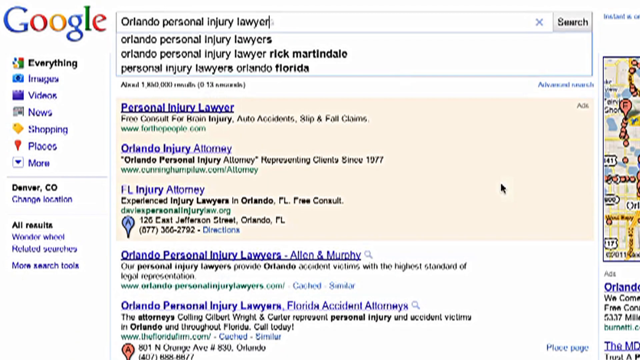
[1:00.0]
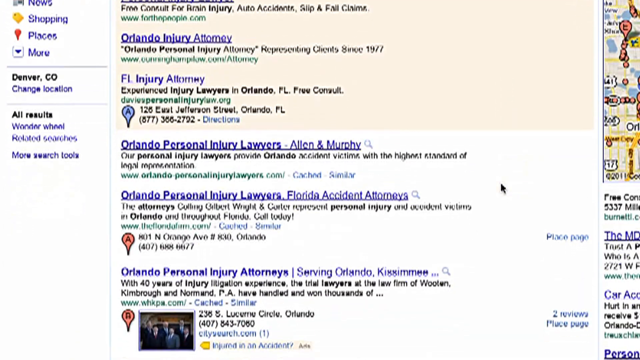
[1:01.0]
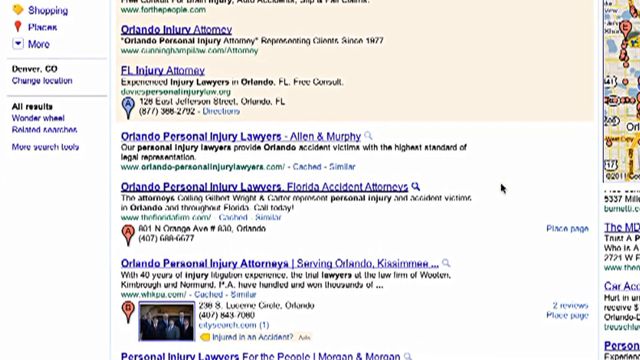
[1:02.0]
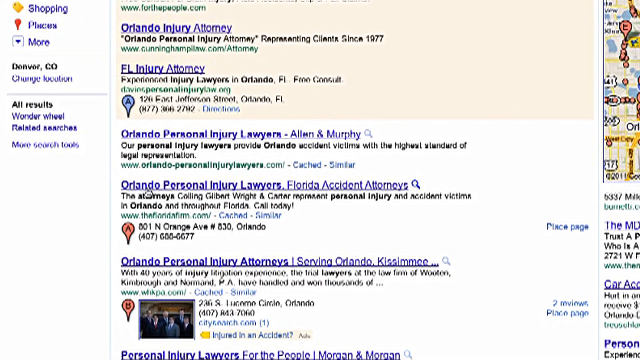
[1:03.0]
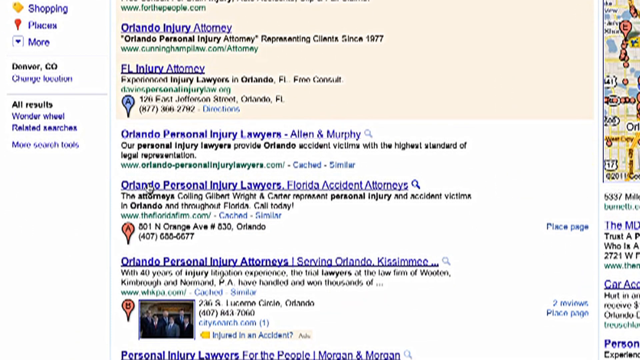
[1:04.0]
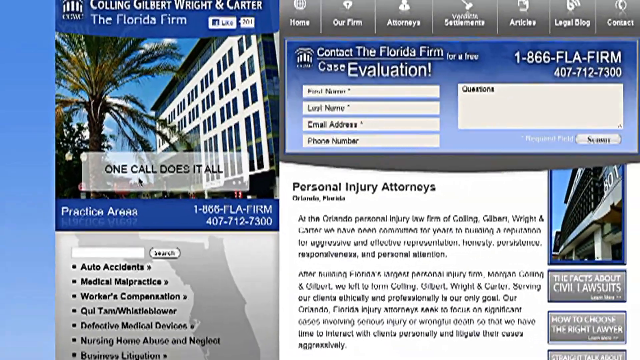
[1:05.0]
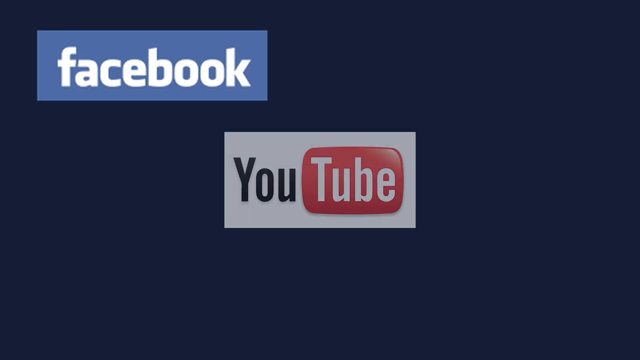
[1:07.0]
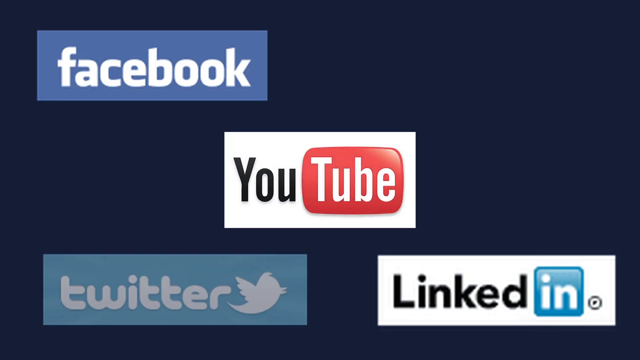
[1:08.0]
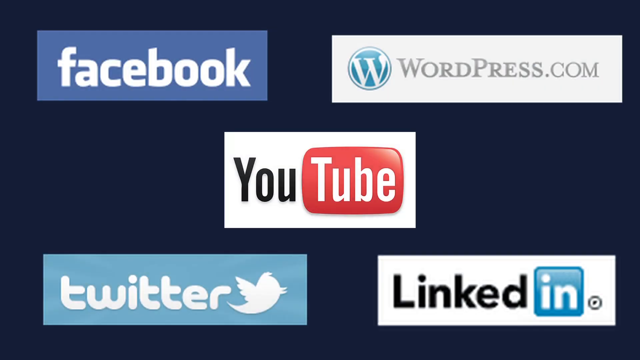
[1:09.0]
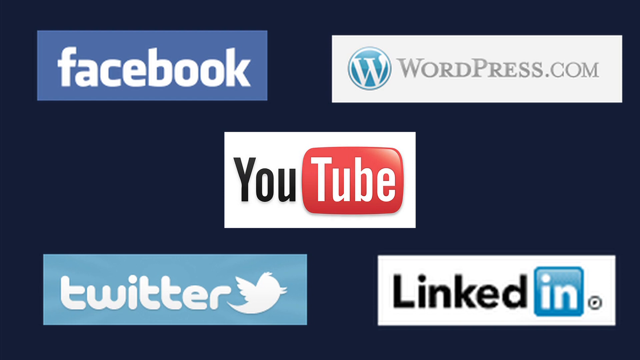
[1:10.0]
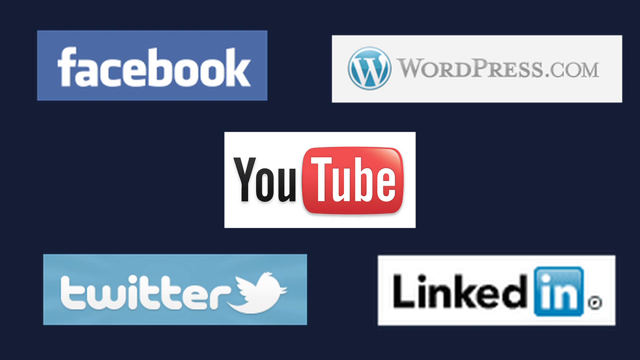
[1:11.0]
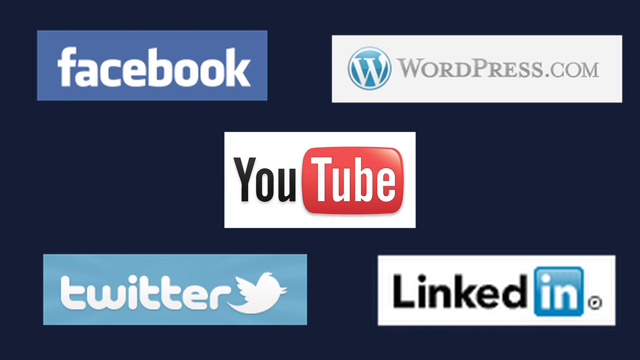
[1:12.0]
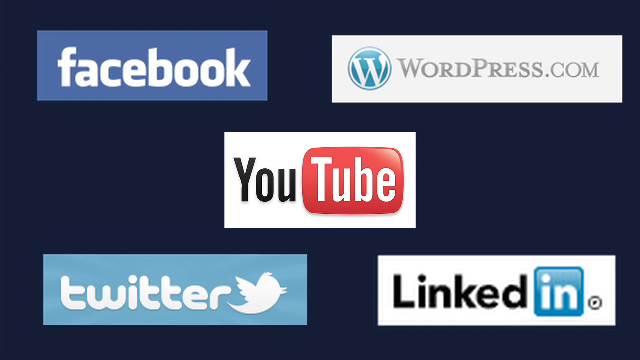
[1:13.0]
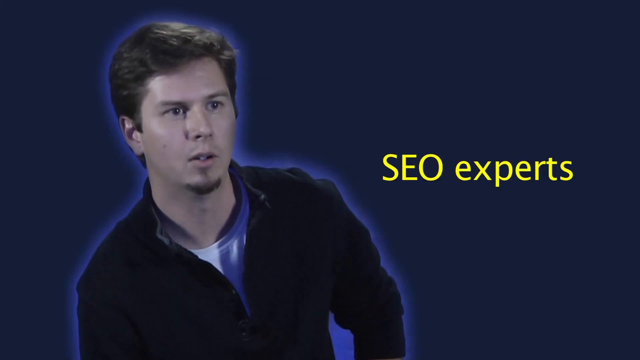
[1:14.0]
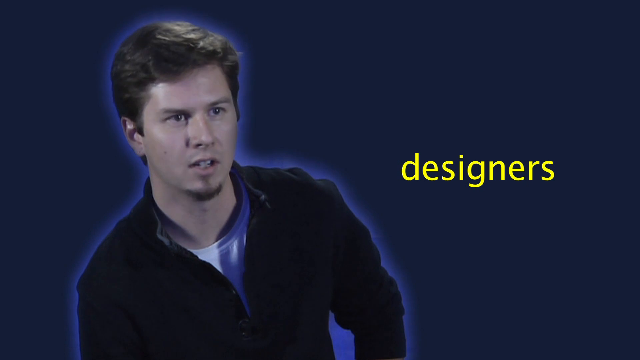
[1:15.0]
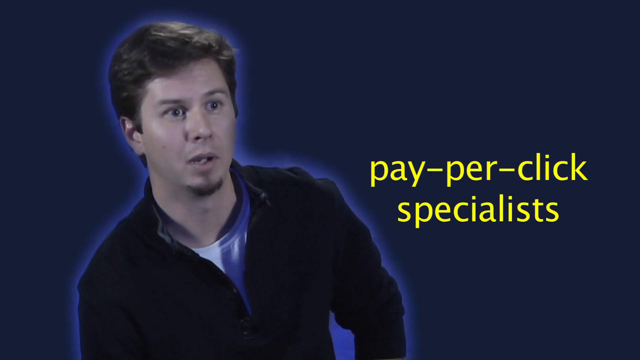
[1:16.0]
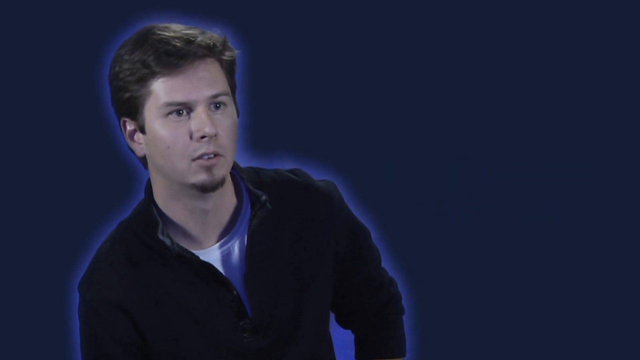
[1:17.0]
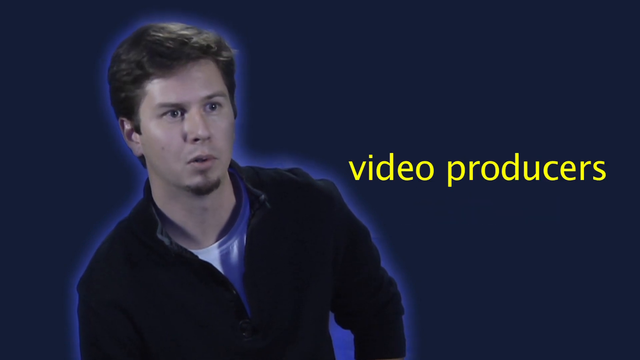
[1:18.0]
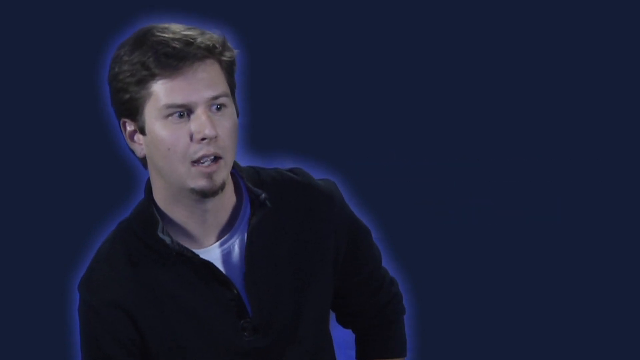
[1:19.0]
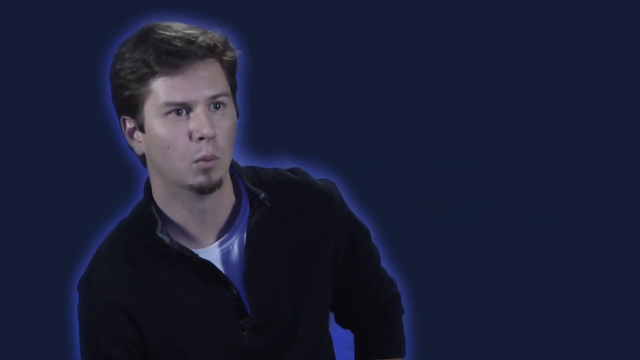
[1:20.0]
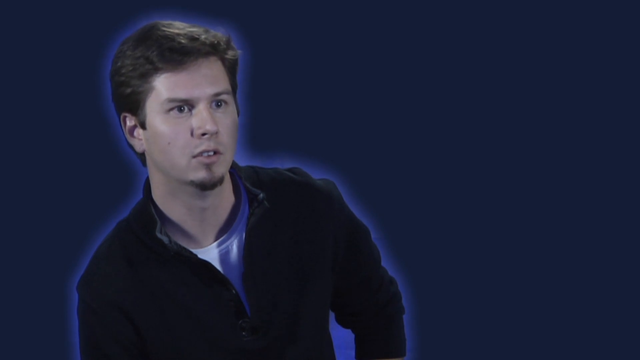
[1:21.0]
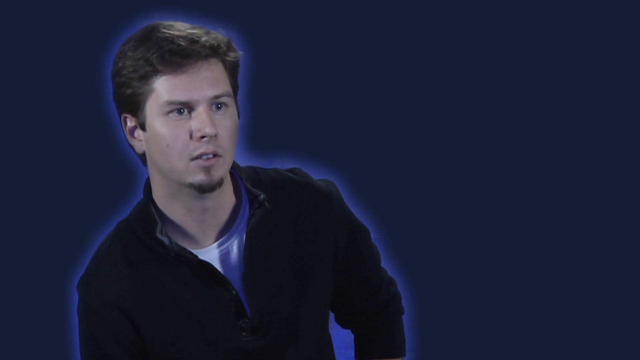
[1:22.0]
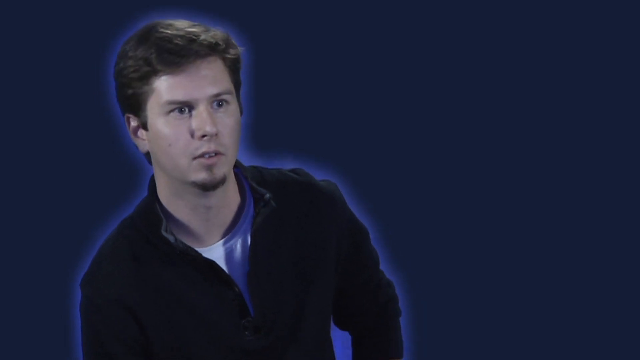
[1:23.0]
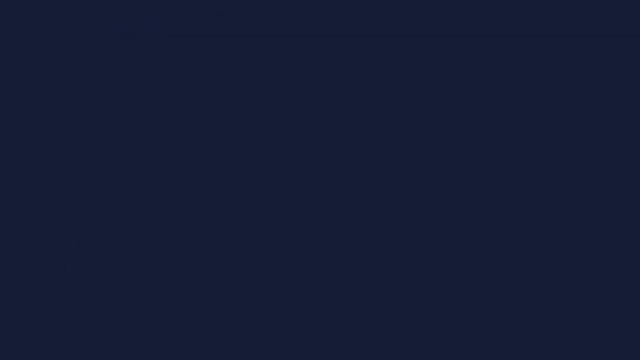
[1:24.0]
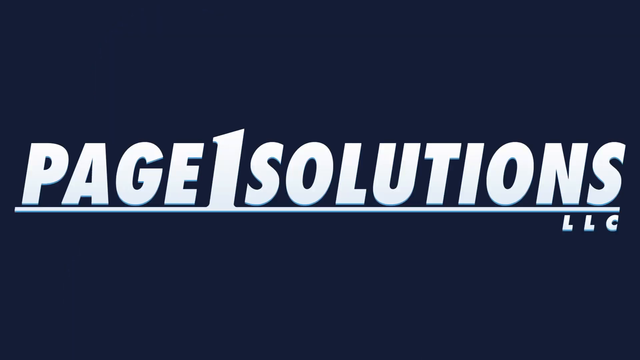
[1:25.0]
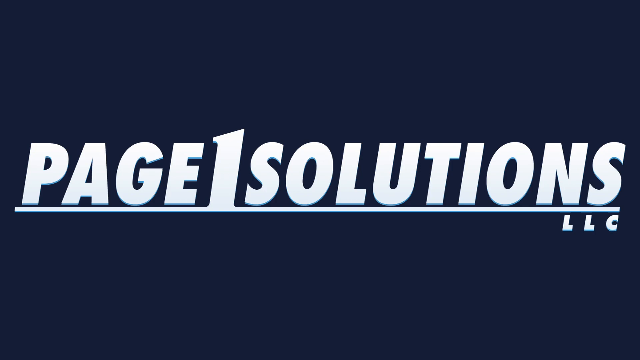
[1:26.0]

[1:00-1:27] On Google, someone has typed "Orlando personal injury lawyer" and scrolls down through the results, then clicks on one. The page opens and is visible for only about a second before the video jumps to social media references. In the upper left corner is Facebook: the word "facebook" in all lowercase letters with a black or blue rectangle behind it. In the middle of the screen is YouTube, with "You" in black letters and "Tube" in white letters inside a red rectangle with curved edges. At the bottom is LinkedIn on a white rectangle, with "Linked" in black letters and "in" in white letters inside a blue square.